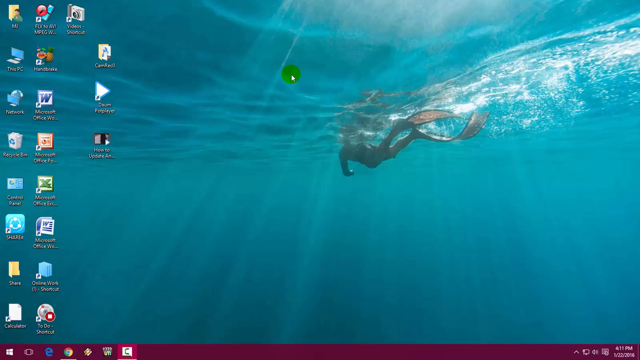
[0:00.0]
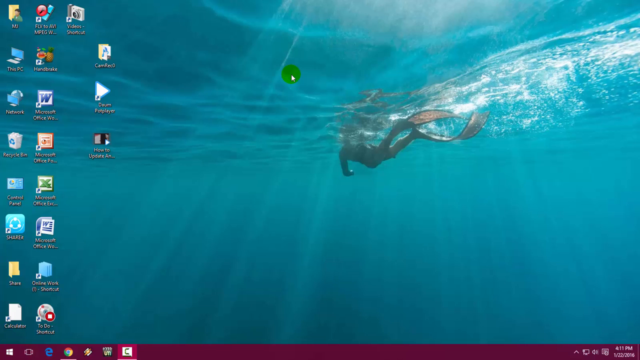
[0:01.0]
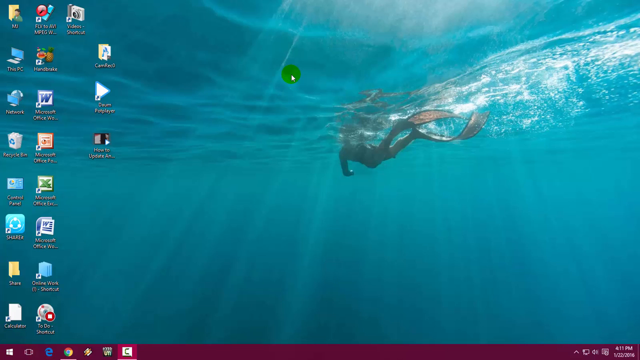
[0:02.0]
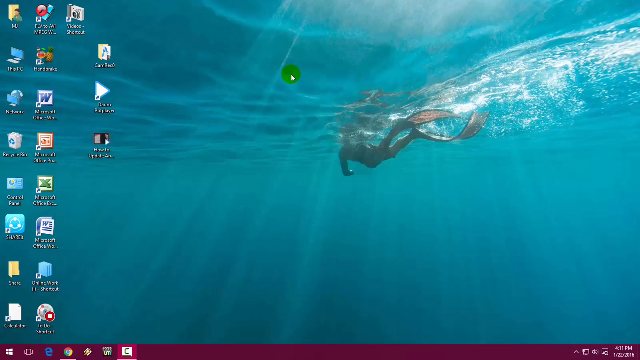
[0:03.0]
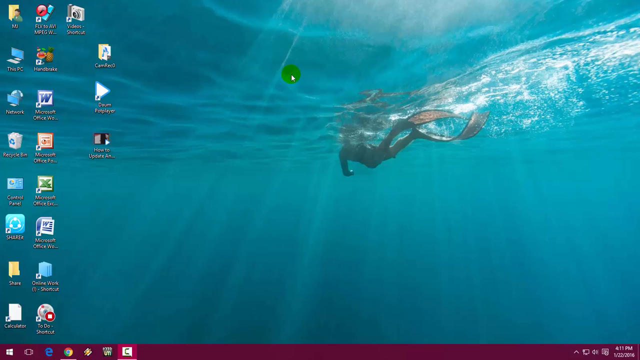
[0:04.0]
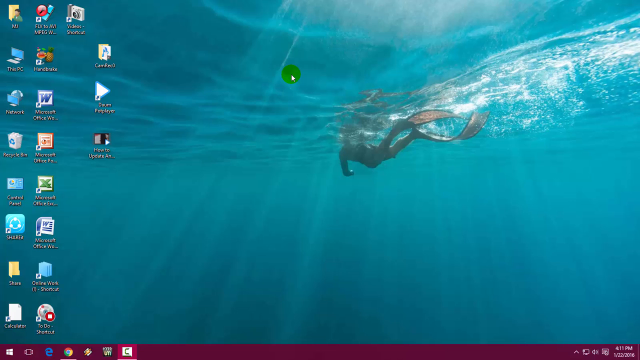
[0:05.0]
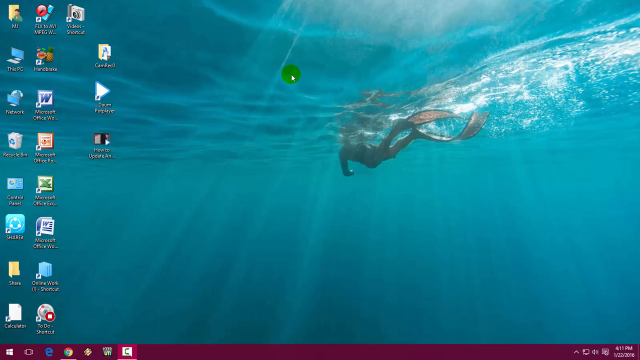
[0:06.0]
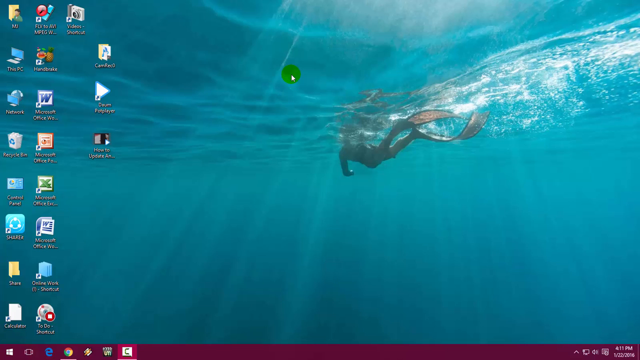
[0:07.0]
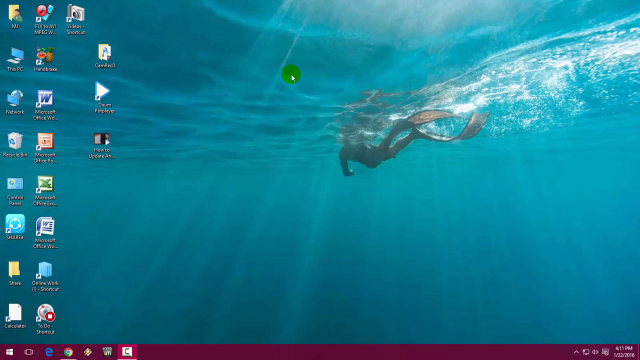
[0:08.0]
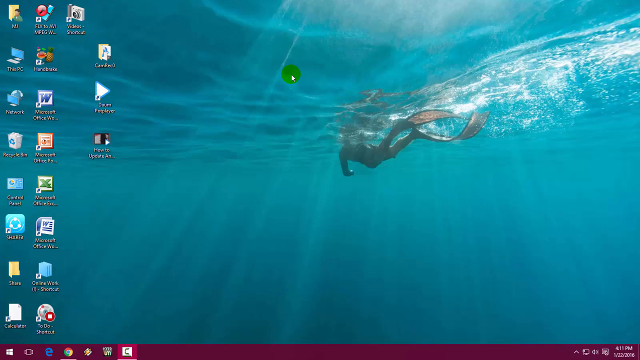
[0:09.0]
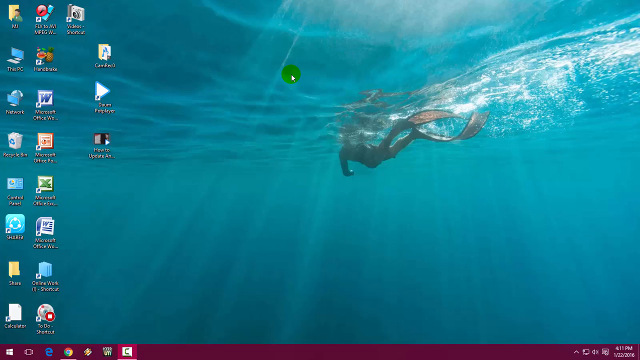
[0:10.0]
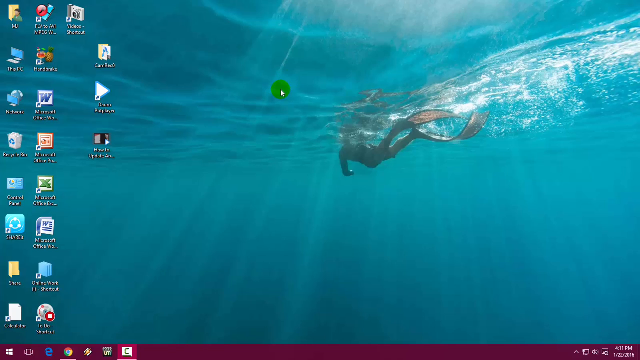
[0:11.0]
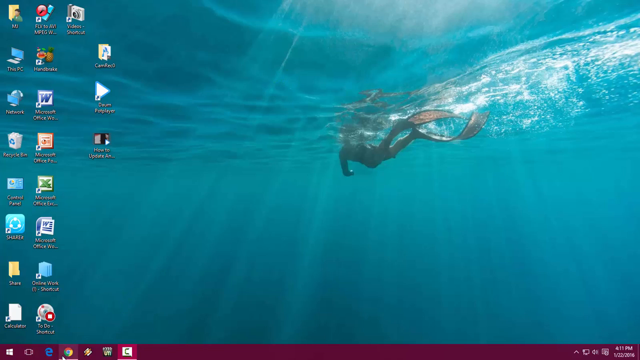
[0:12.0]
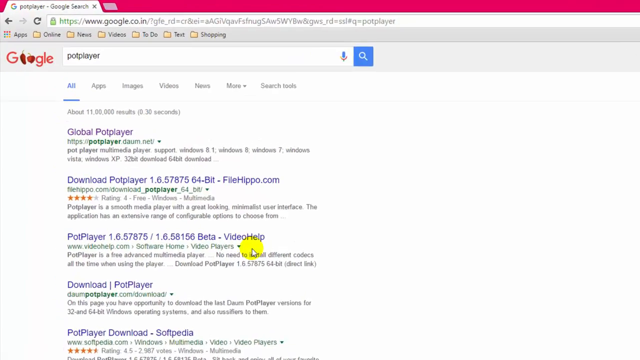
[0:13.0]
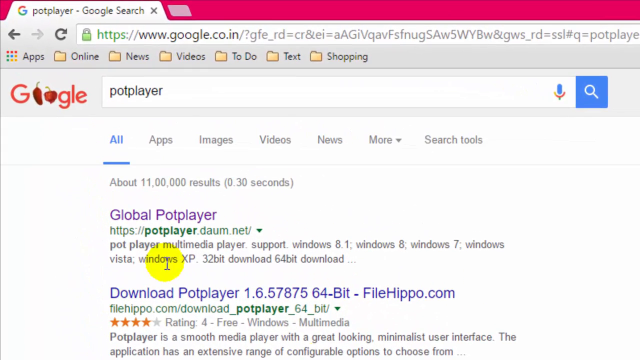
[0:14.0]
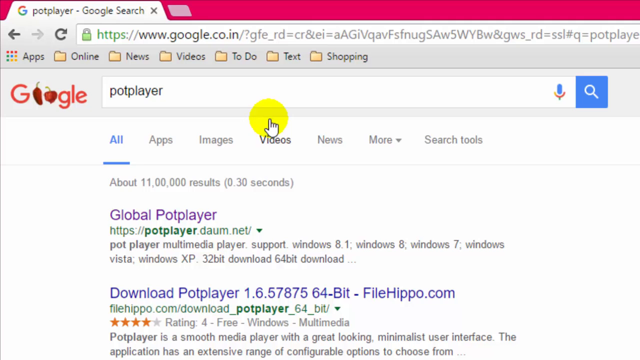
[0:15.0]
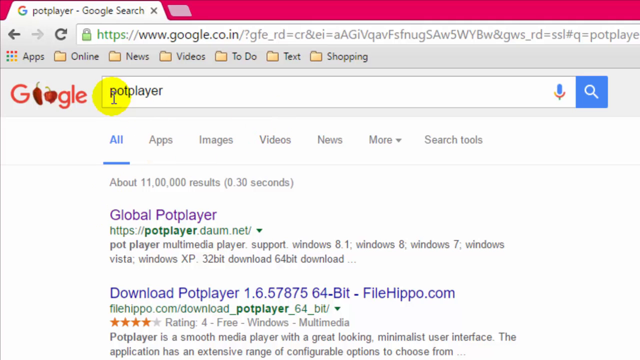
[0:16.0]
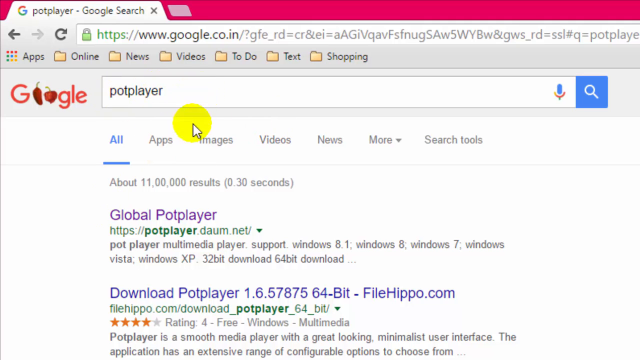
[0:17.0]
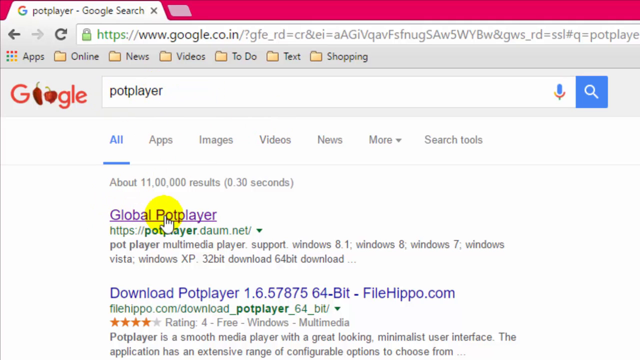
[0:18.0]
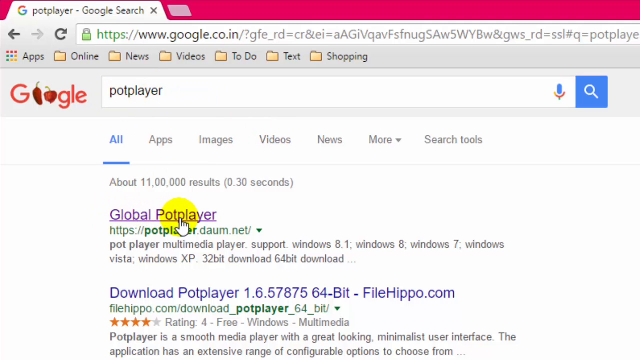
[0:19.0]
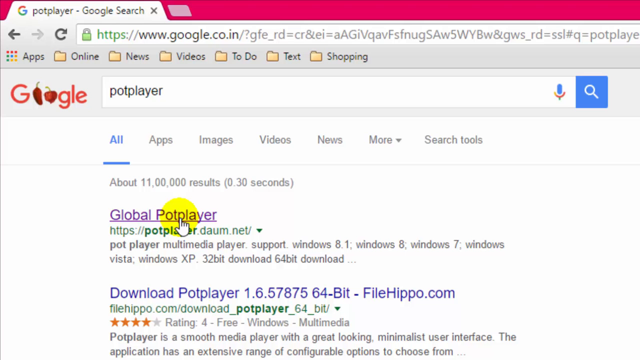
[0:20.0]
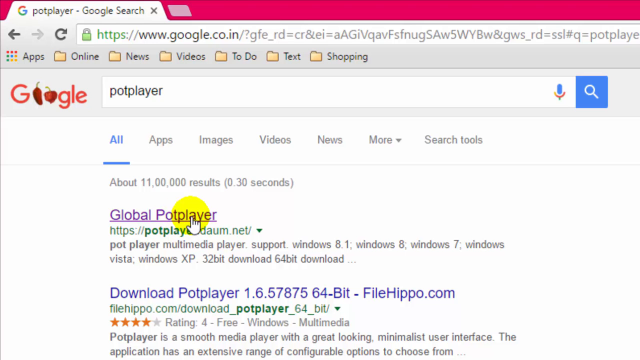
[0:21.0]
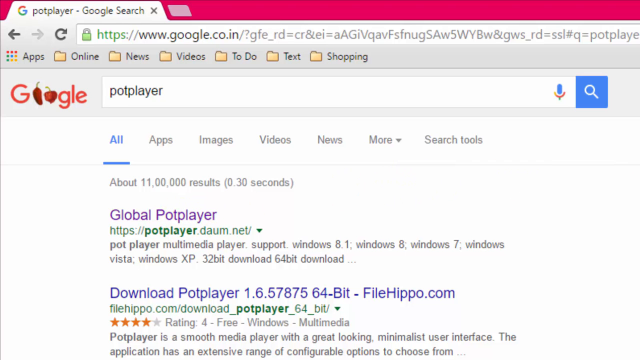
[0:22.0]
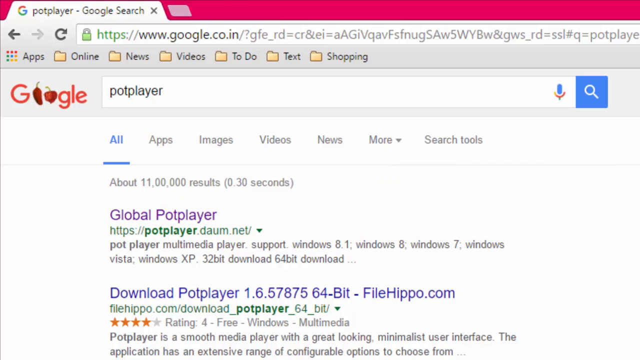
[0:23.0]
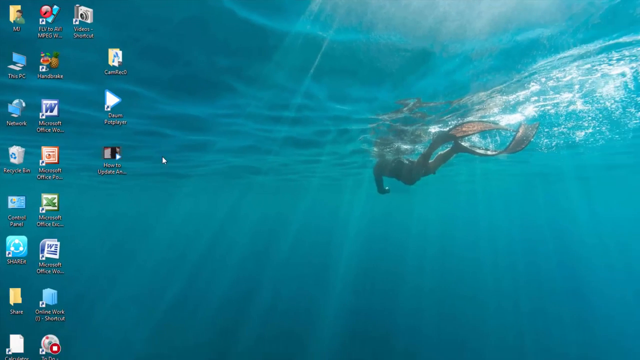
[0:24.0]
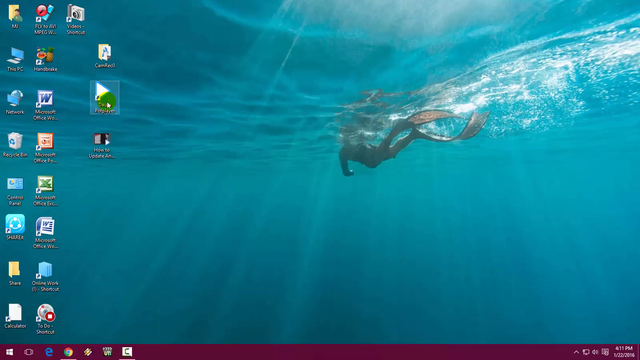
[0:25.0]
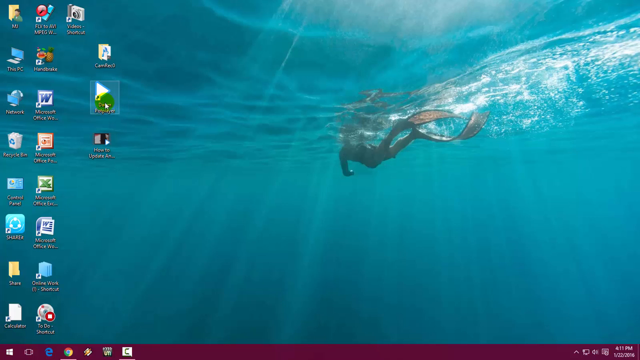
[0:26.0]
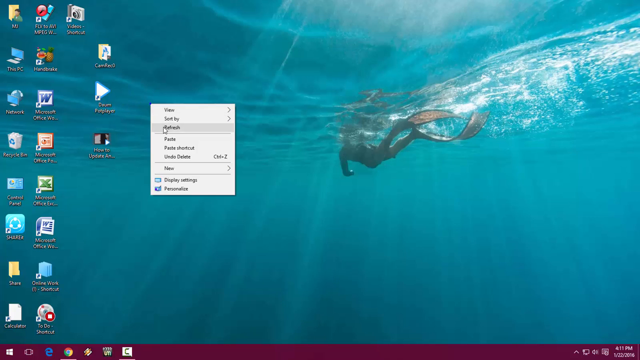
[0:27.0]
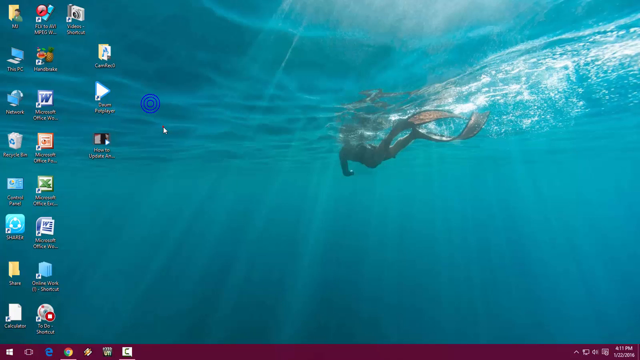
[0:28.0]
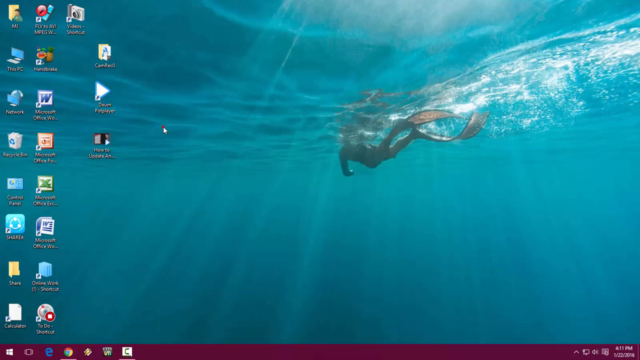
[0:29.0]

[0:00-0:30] A desktop screen has a background image of a person snorkeling, with the desktop icons on the left side lined up in rows vertically. The view stays on the desktop for a few seconds. The cursor then goes down to the Google Chrome icon pinned on the bottom of the system tray, which opens a browser showing search results for the query "potplayer". The view kind of zooms in on the first search results. The mouse, which has a yellow circle highlight, hovers over the query written in the search box, then goes down and hovers over the first web result, titled "global potplayer", for a few seconds before the browser is closed and the view returns to the desktop. The mouse then hovers over a desktop icon that looks like a white play button with a blue outline, called "Daum Potplayer"; the icon is right-clicked and refresh is selected.